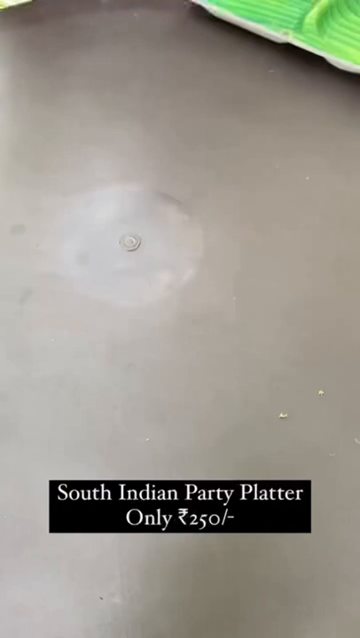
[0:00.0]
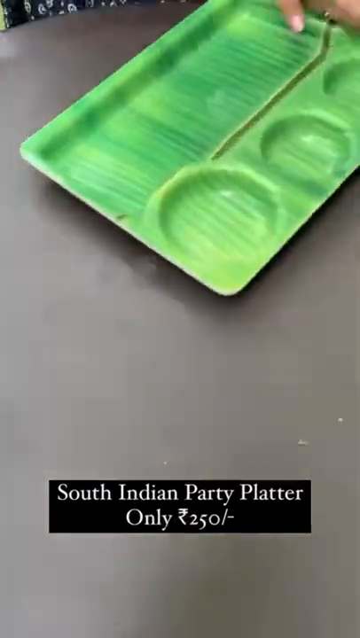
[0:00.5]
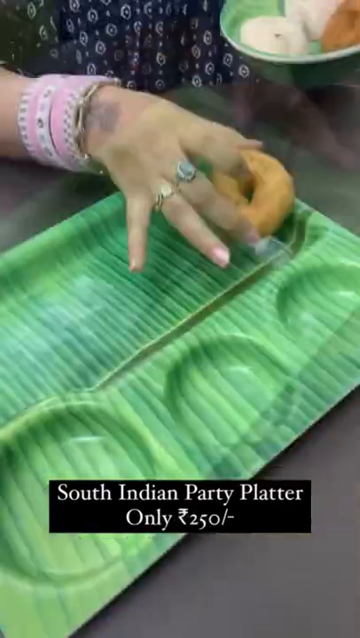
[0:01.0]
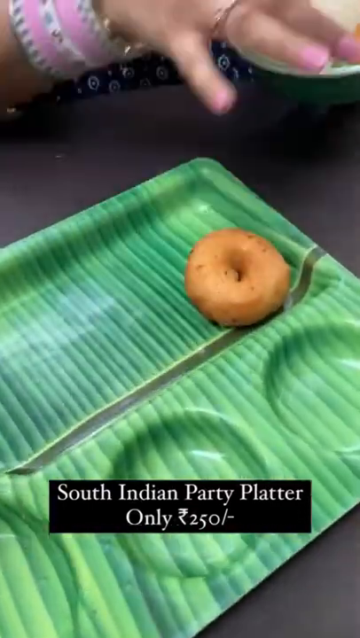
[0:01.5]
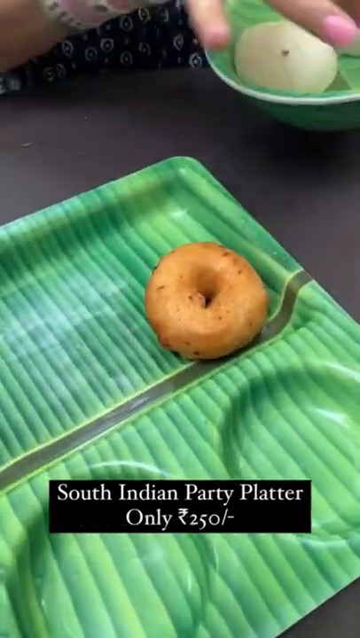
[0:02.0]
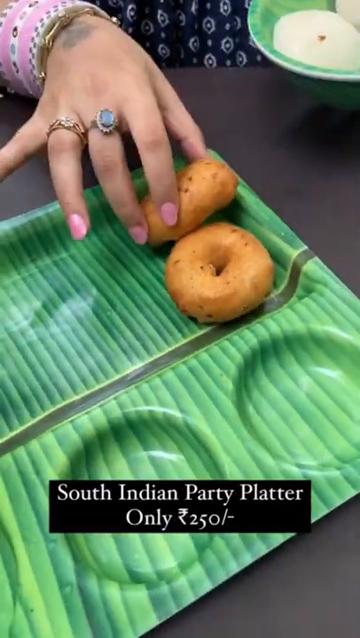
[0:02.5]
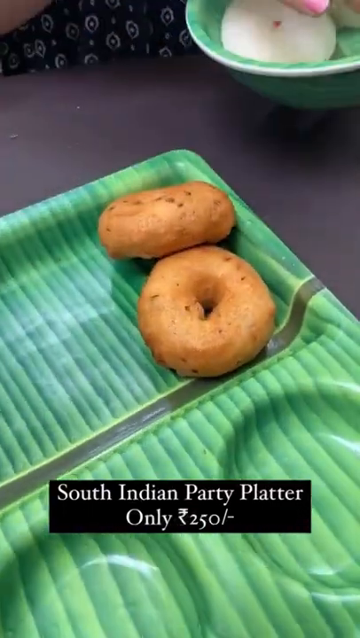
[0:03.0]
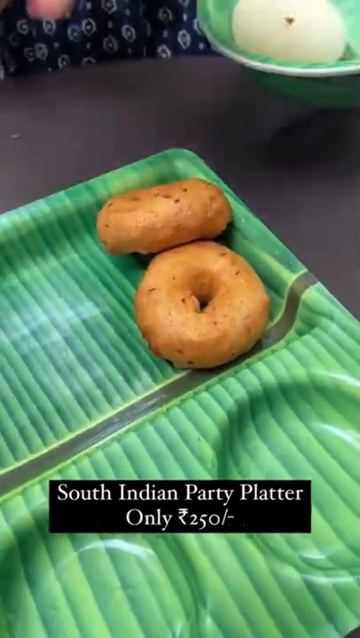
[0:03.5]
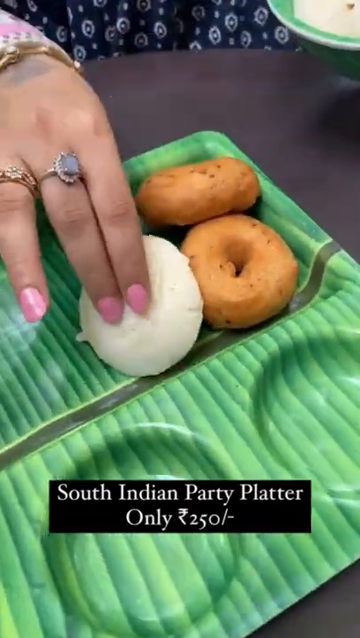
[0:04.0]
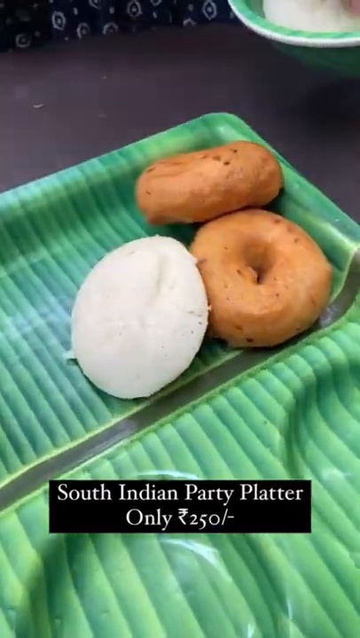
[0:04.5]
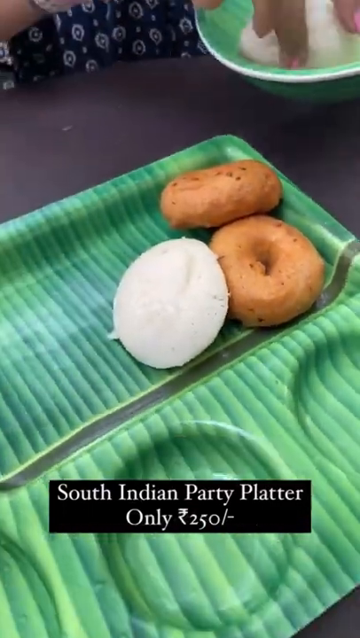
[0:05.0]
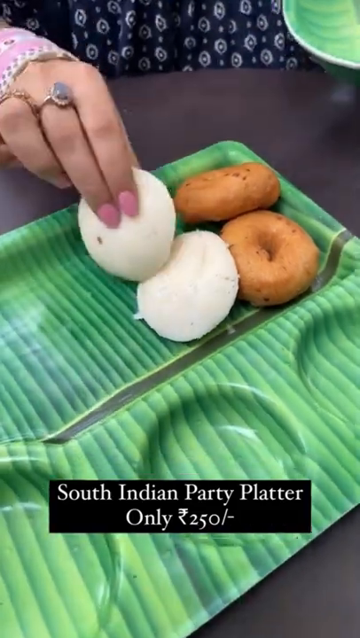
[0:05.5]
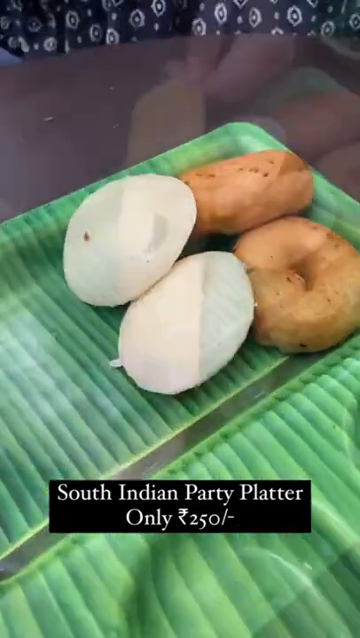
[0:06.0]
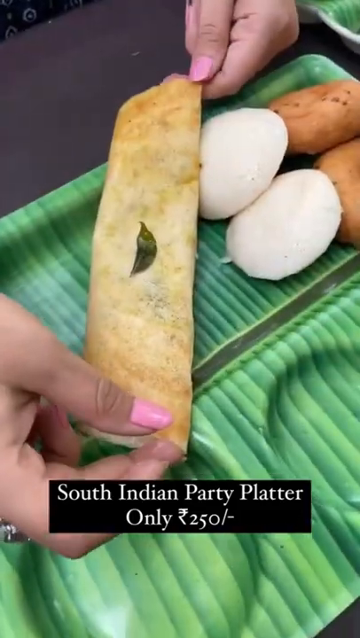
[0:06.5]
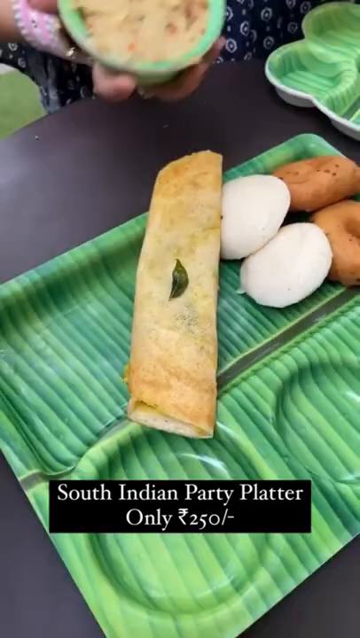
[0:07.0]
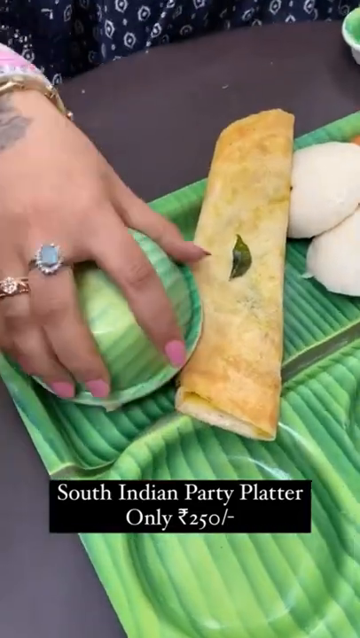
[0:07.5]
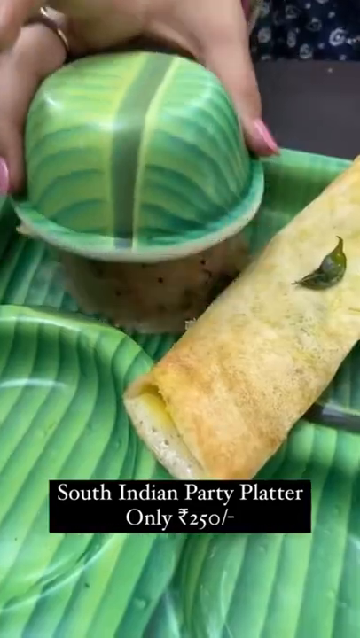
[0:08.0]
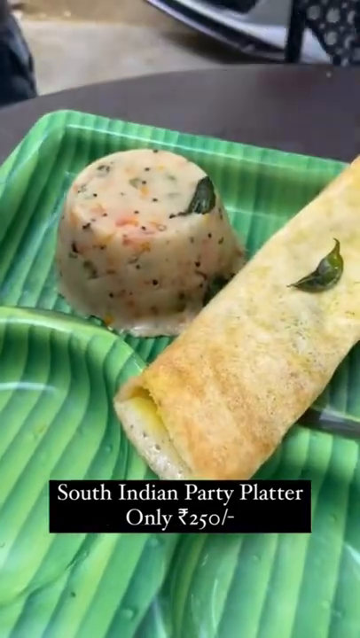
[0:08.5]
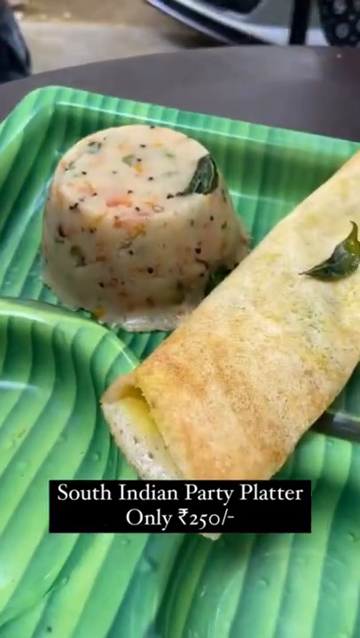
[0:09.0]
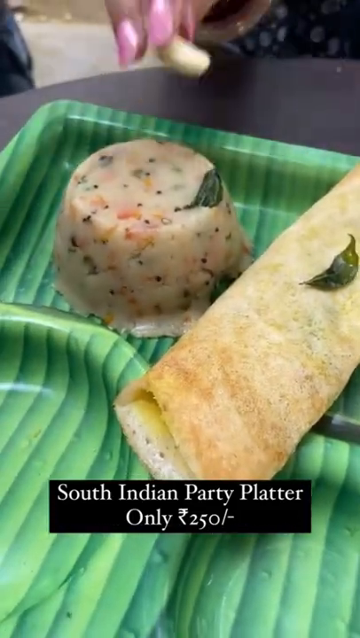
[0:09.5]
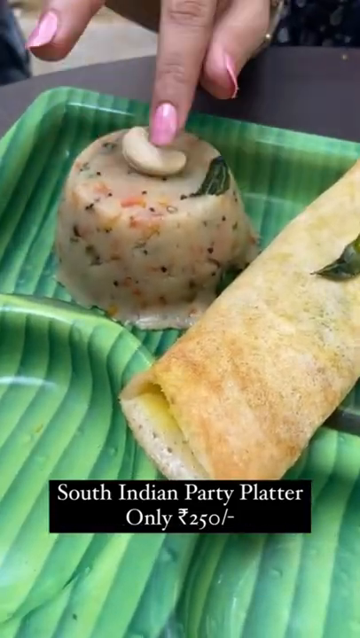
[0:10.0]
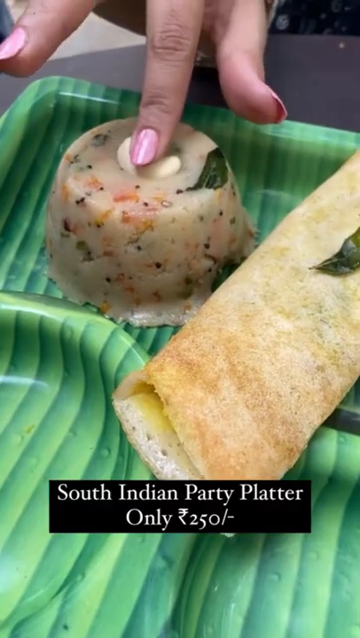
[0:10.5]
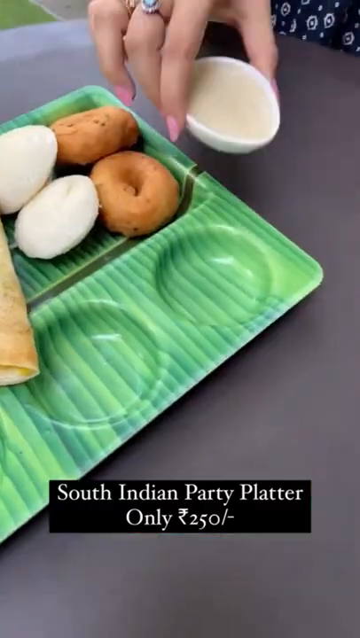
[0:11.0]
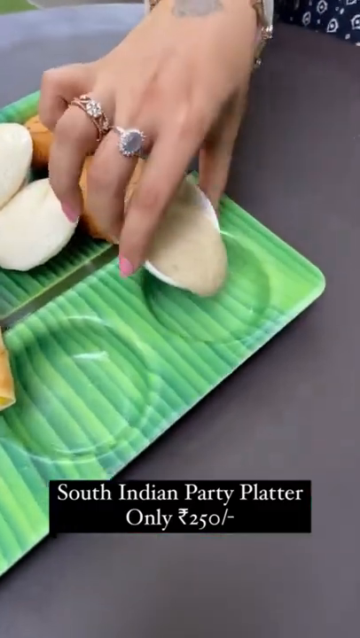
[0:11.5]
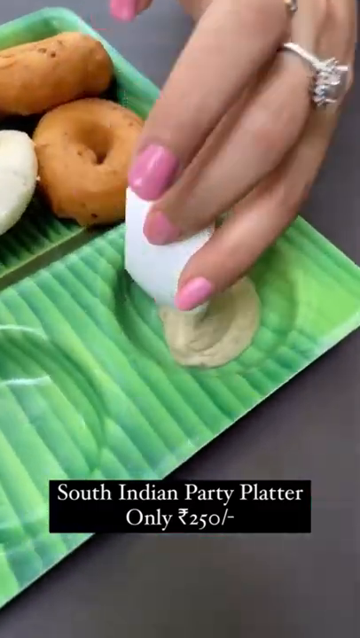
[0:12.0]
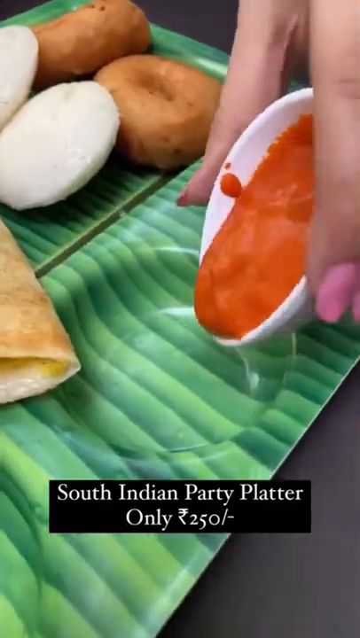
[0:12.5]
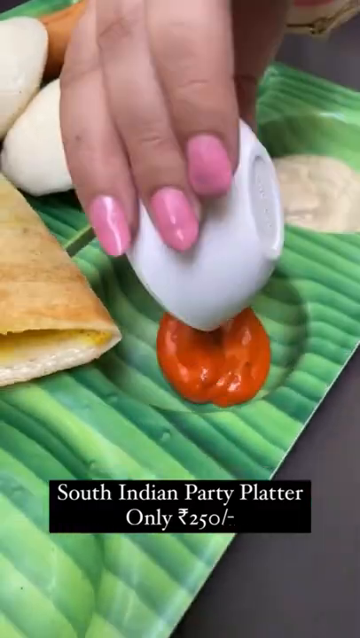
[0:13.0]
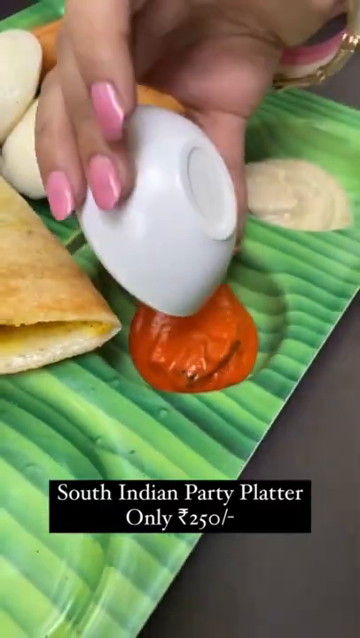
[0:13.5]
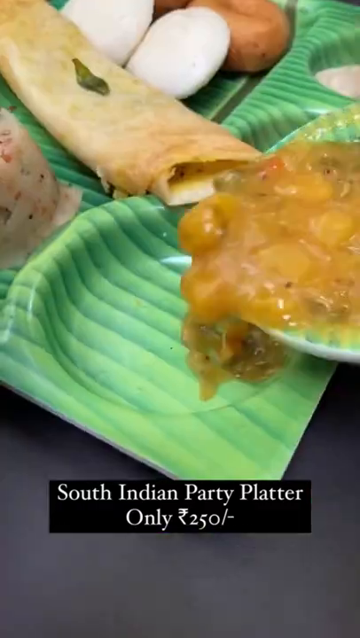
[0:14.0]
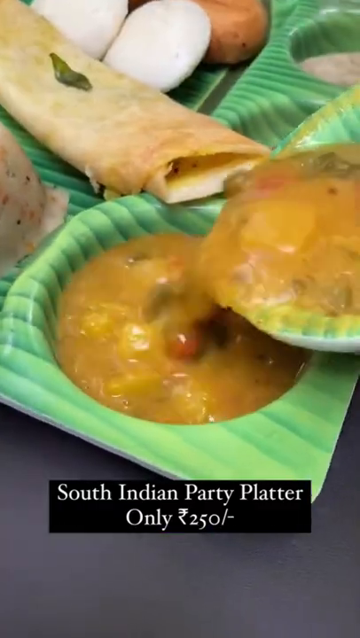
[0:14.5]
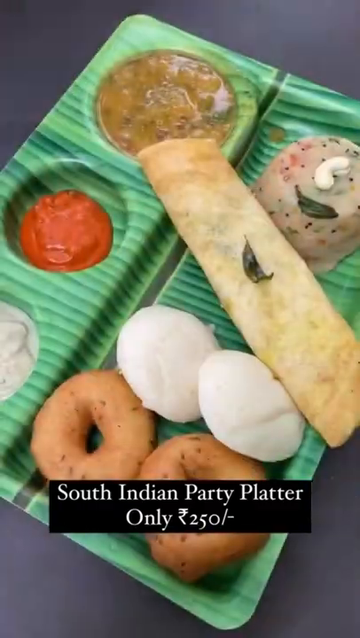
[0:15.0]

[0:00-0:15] A lady is preparing what looks somewhat like an Indian dish, using a green tray with one rectangular section and three circular ones. In the rectangular section she places two doughnuts, two pieces of bread, and a long piece of bread. The long piece is brown, white and brown, while the two round pieces of bread are mostly off-white. Alongside the doughnuts and bread is something that looks somewhat like a scoop of sushi, and she places what appears to be a nut on top, possibly a walnut or a cashew. The three circles are somewhat like cups and seem to hold sauces for dipping the food. Into the first circle she pours a yellowish sauce, and into the second cup a reddish-orange sauce. The last cup, whose circle is a little bigger than the other two, holds what looks like a vegetable soup or stew, with visible pieces of vegetable and an overall color that appears green.